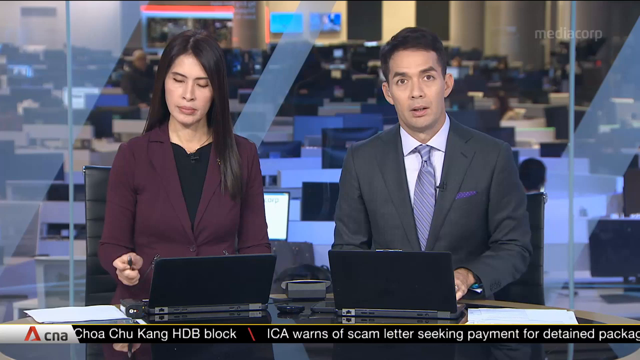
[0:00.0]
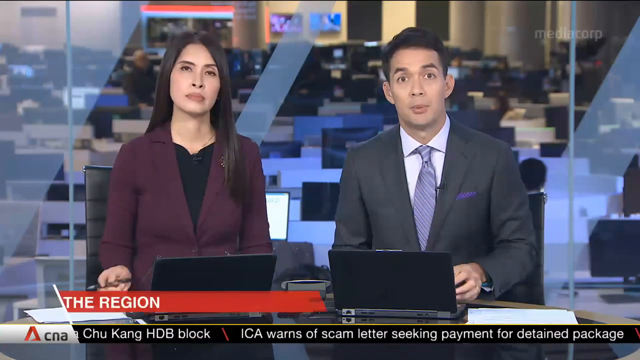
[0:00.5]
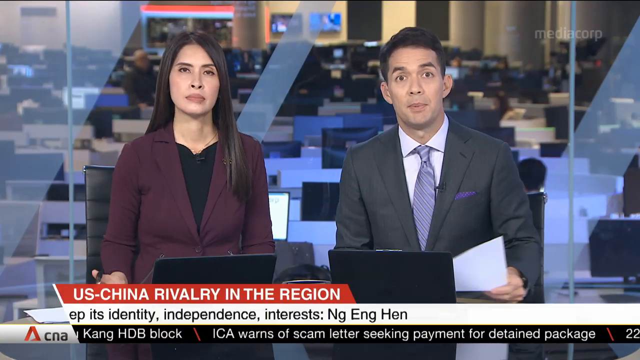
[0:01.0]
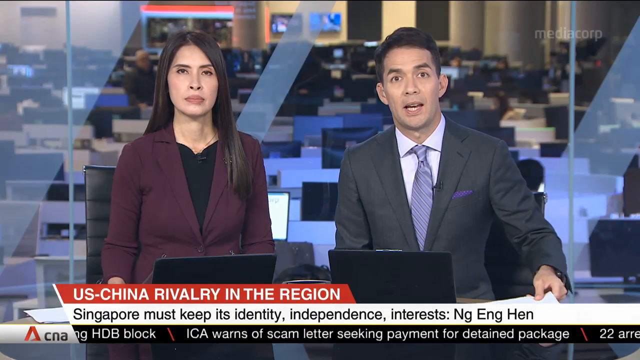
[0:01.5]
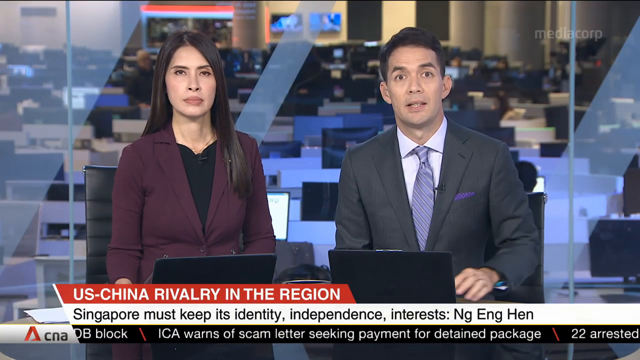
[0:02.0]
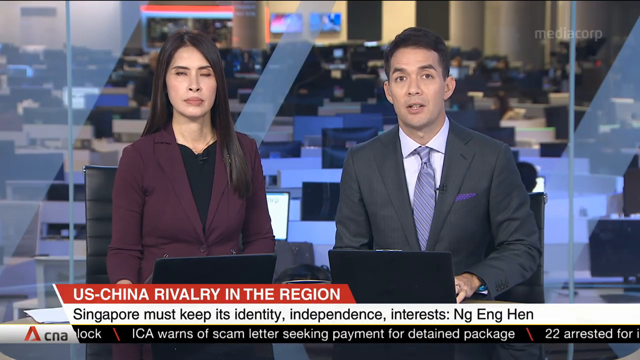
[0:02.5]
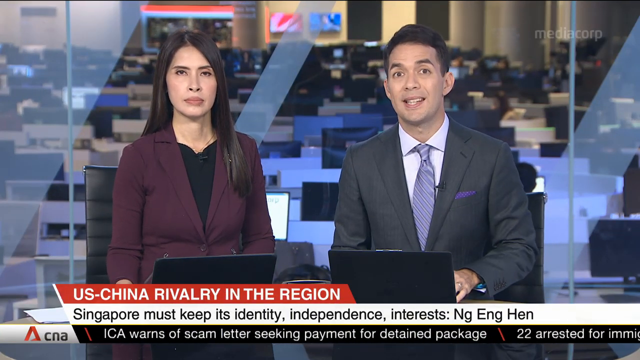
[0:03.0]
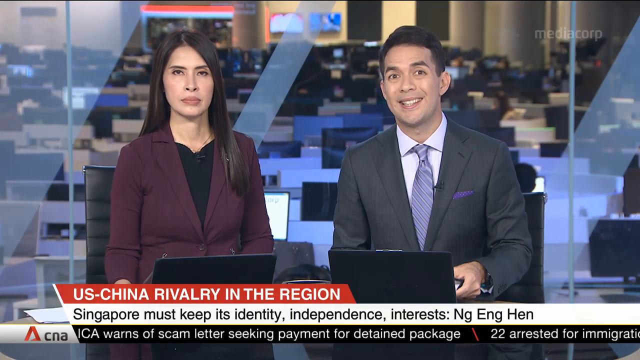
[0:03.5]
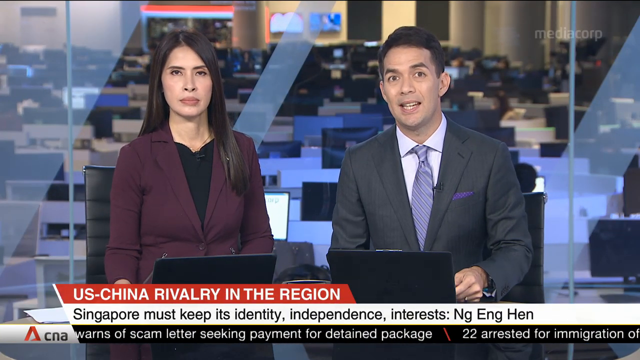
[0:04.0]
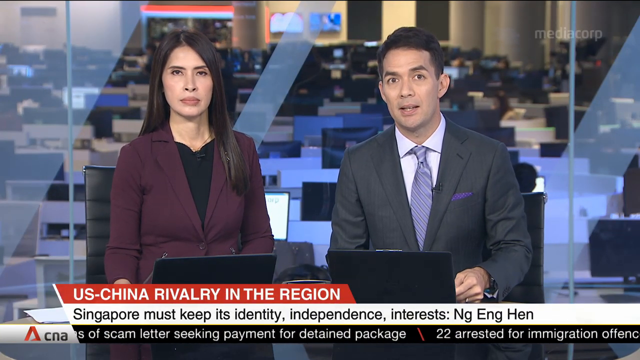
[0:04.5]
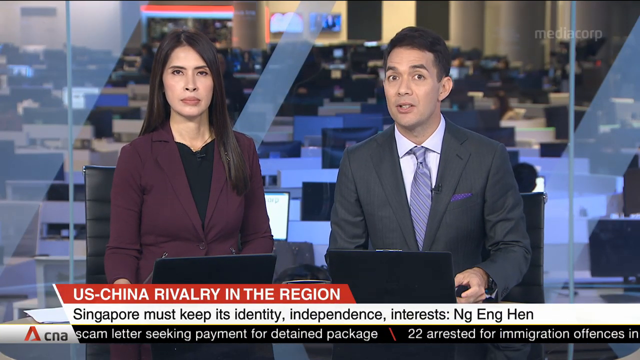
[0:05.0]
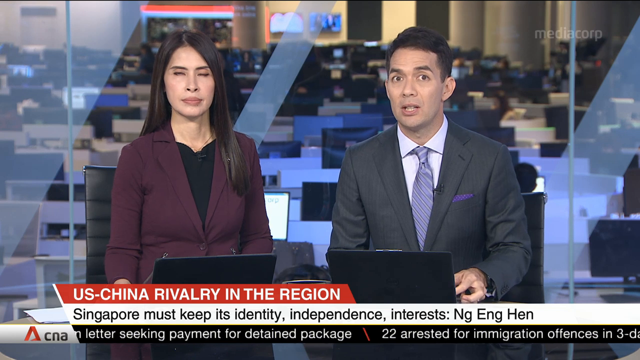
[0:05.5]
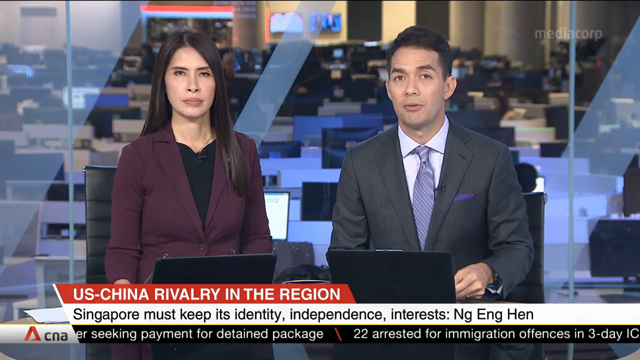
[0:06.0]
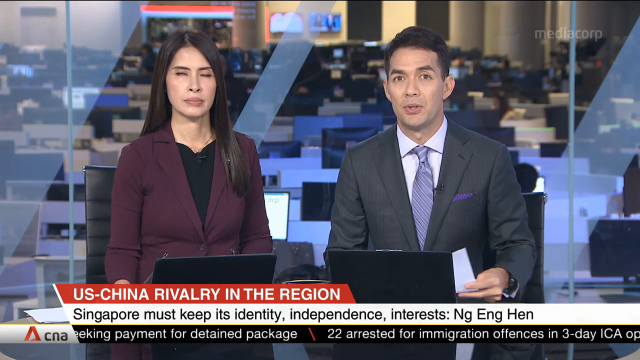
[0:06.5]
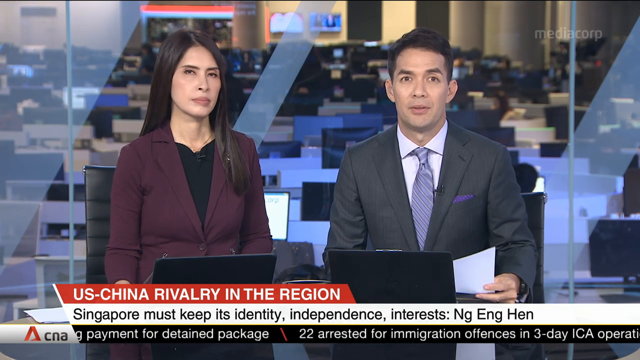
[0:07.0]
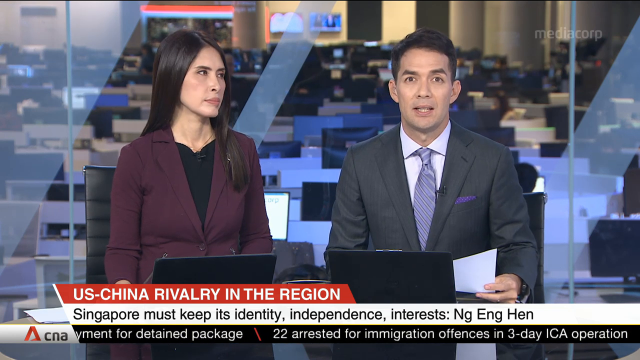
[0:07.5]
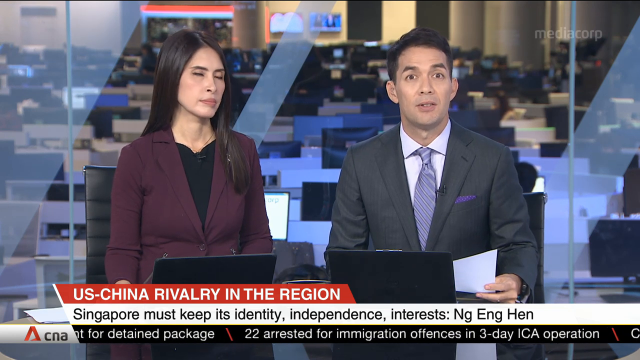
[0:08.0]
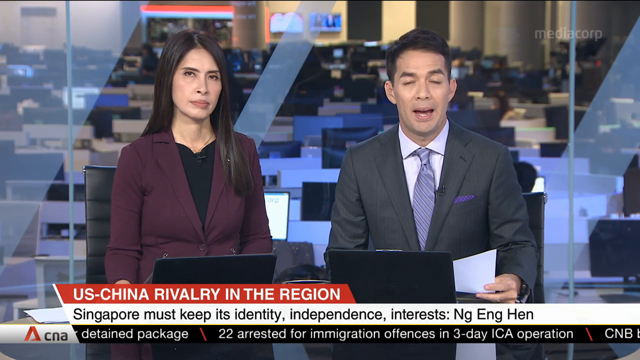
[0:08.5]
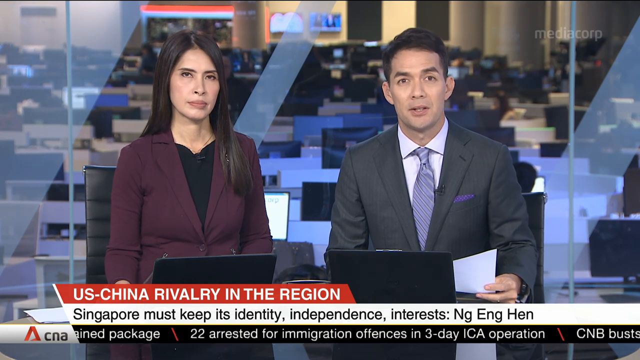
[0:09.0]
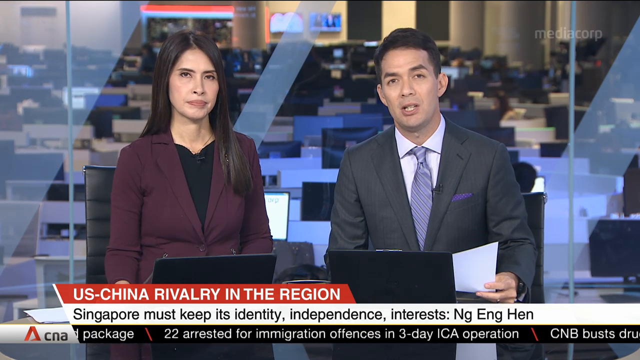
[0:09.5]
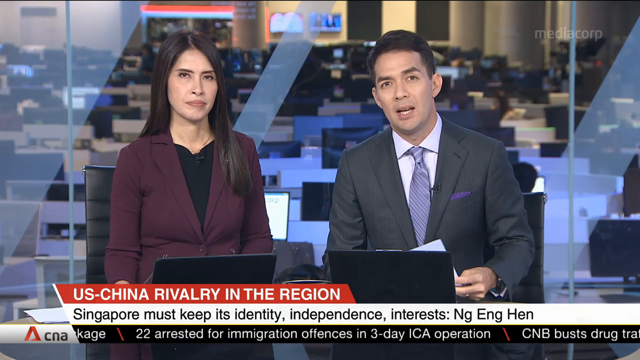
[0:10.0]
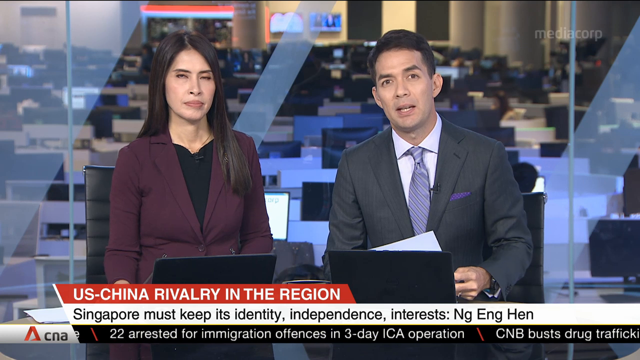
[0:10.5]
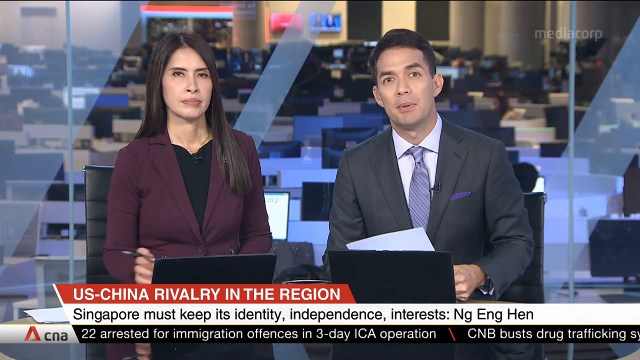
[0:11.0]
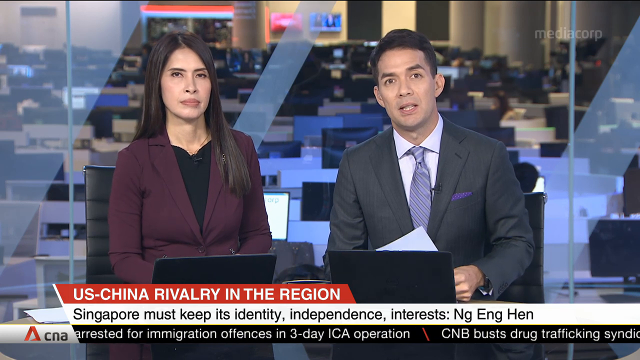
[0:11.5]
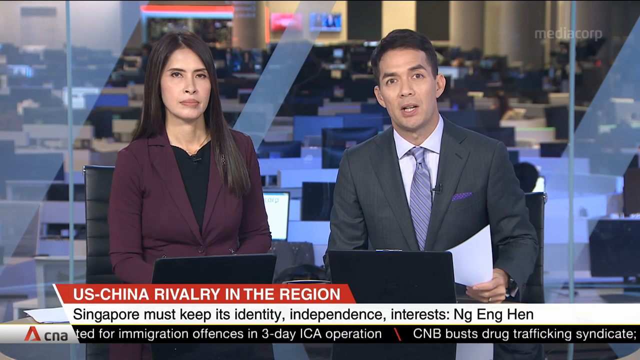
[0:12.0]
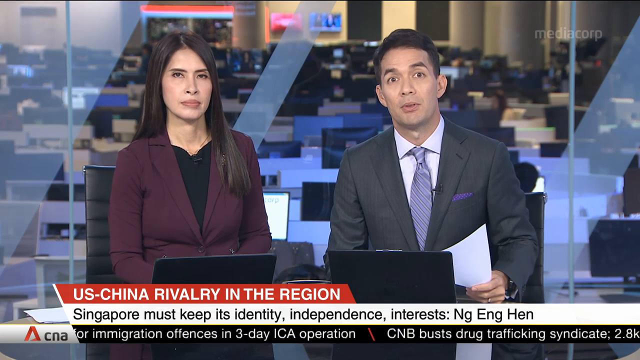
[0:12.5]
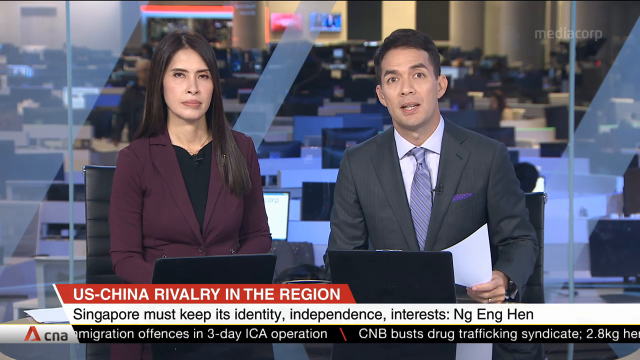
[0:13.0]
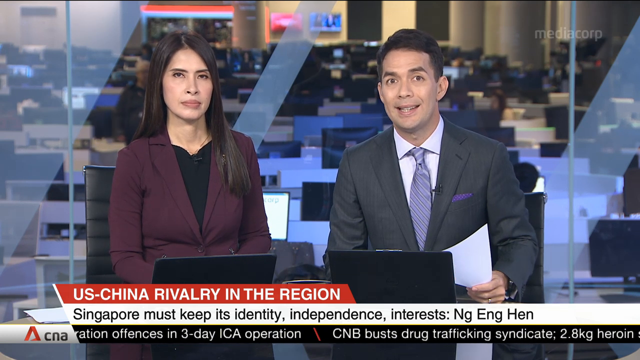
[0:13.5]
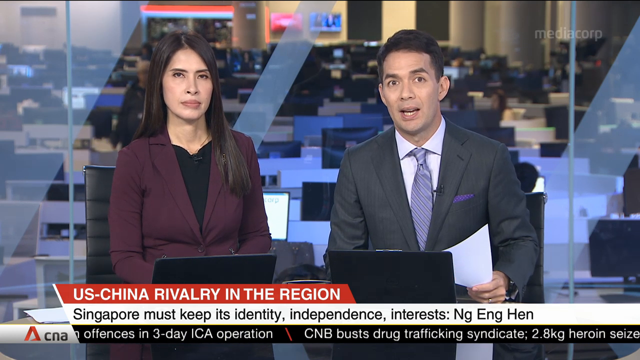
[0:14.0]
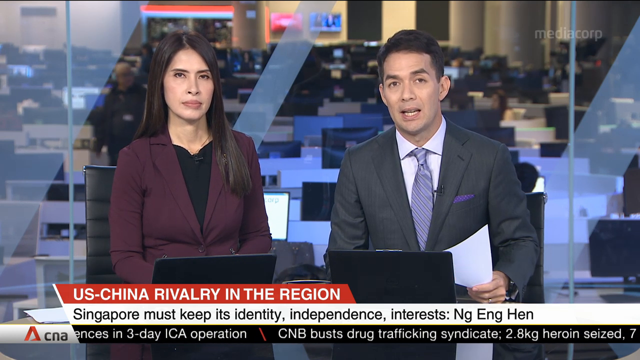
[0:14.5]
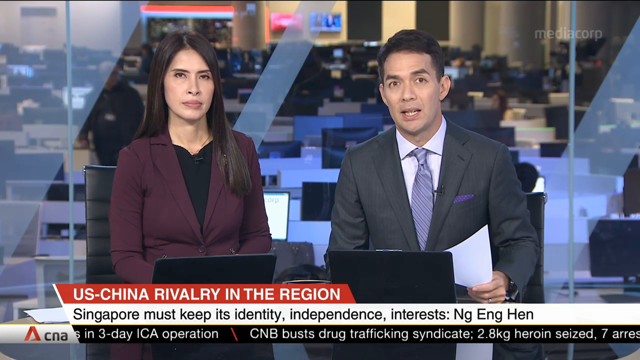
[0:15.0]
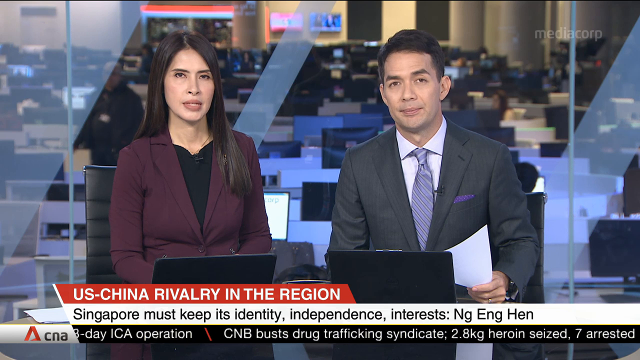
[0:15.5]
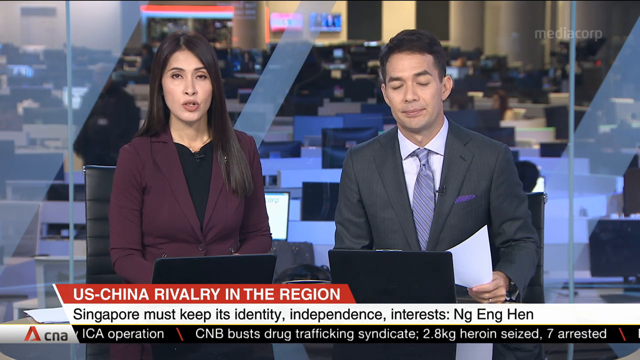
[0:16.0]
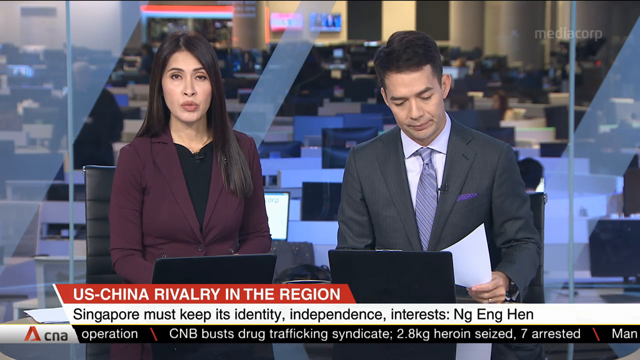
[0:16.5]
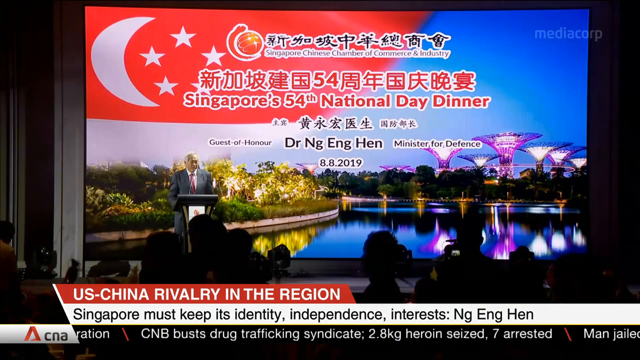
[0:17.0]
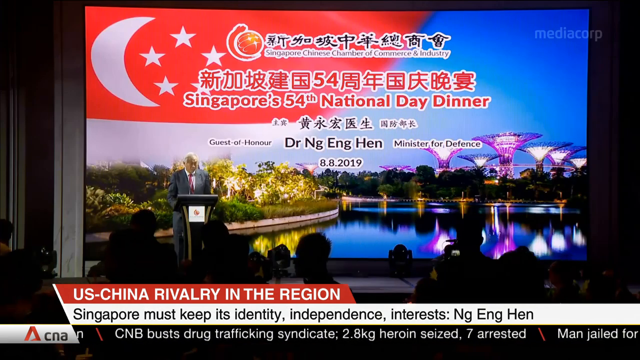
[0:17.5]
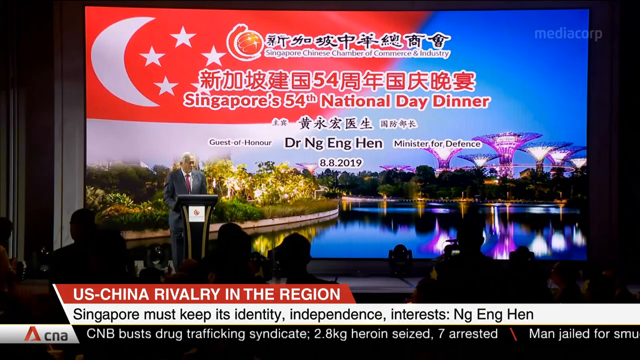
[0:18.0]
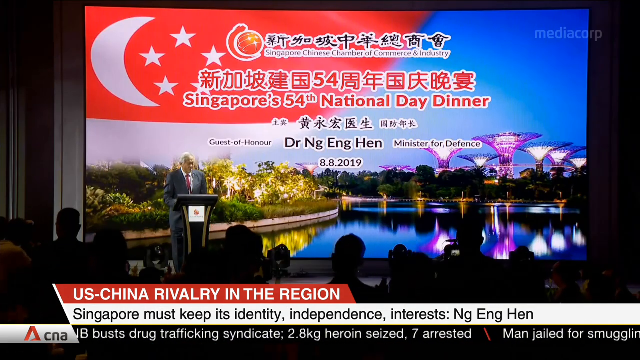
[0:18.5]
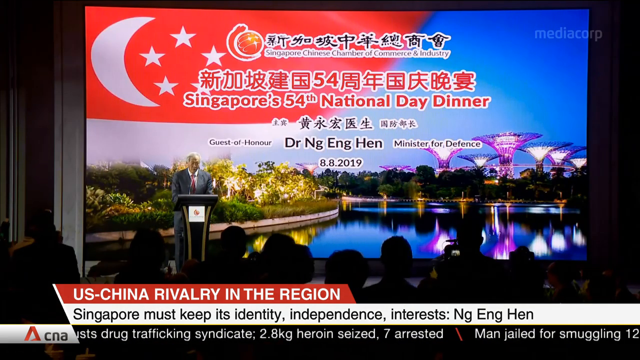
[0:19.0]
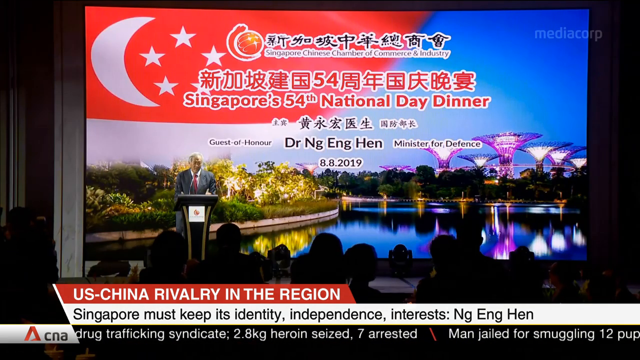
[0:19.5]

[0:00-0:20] This footage from the news channel CNA opens in a news studio, where two presenters sit quite close to each other on black leather swivel chairs, with laptops on the desk in front of them. The anchor on the left of the frame is a woman with long dark brown hair worn in a centre part, wearing a black top under a burgundy blazer. The anchor on the right is a man with short black hair, wearing a dark grey blazer, a white shirt and a blue tie. Behind them there appears to be a glass or perspex screen separating them from a large newsroom filled with several rows of desks and computers. Across the bottom of the screen are a couple of graphic straps and a news ticker: the upper strap is red with white text reading "US-China rivalry in the region", and the strap below it is white with black text reading "Singapore must keep its identity, independence, interests". Along the very bottom are the CNA logo and a black strap with a white ticker of current headlines running across it. In the top right corner is a quite transparent, very subtle MediaCorp logo. The male anchor talks at length while the female anchor looks straight into the camera and occasionally turns her head to look at him; he holds a page of his script in his left hand, moving it around slightly. He then looks down as the female anchor begins to speak instead. The video cuts to footage of a large conference: a man stands at a podium in front of a screen delivering a speech, with the backs of the audience members' heads visible. The screen shows an image of some buildings in Singapore with captions over it, stating that this is Singapore's 54th National Day Dinner and that the guest of honour is Dr Ng Eng Hen, Minister for Defence. People walk around the conference as he speaks.